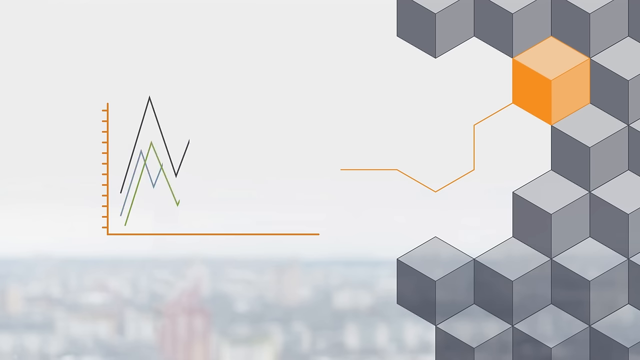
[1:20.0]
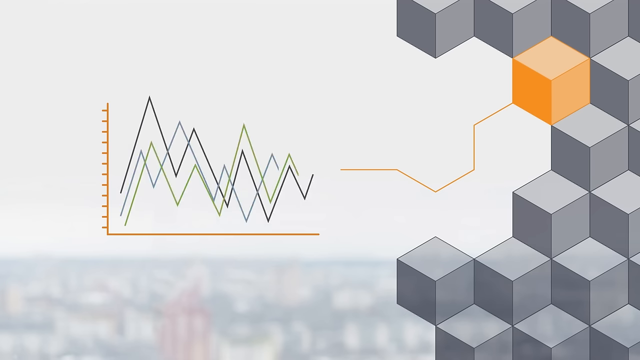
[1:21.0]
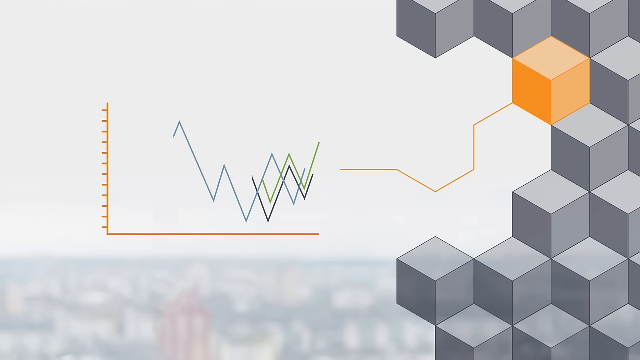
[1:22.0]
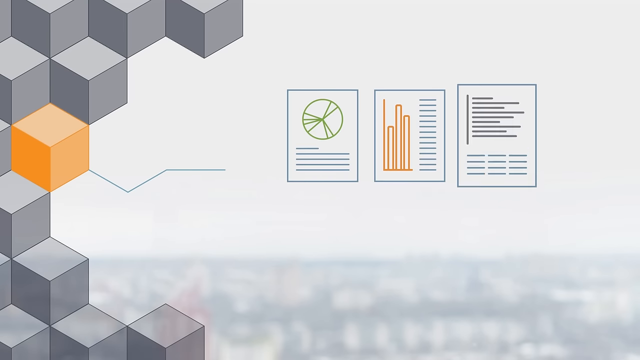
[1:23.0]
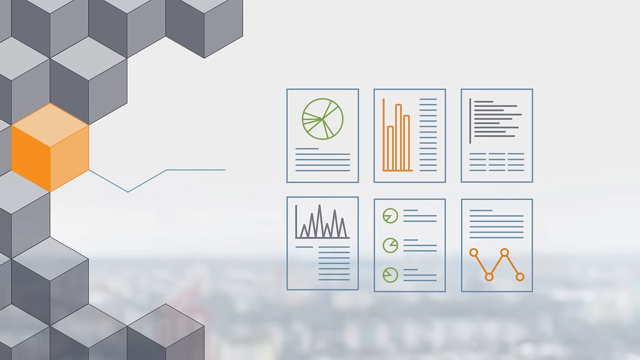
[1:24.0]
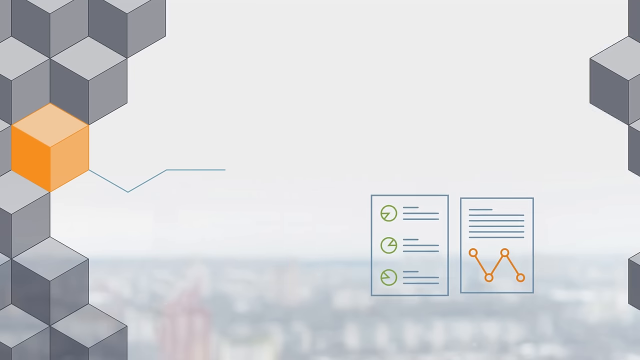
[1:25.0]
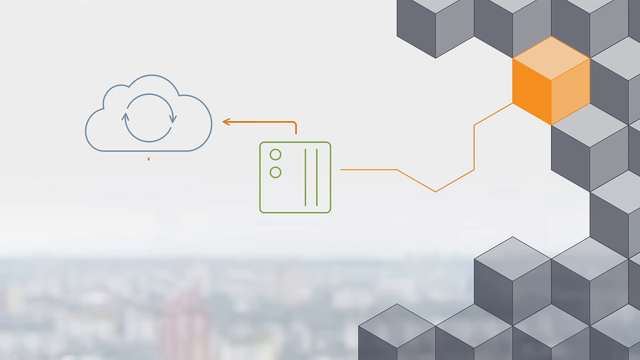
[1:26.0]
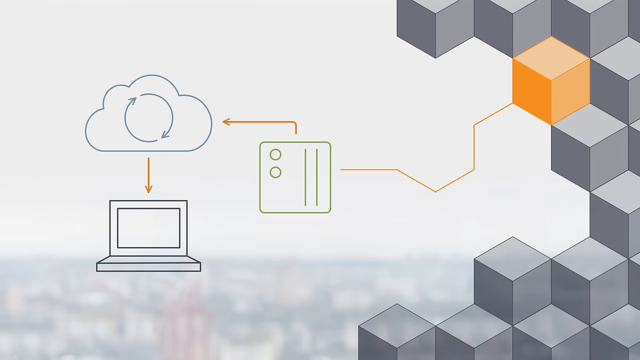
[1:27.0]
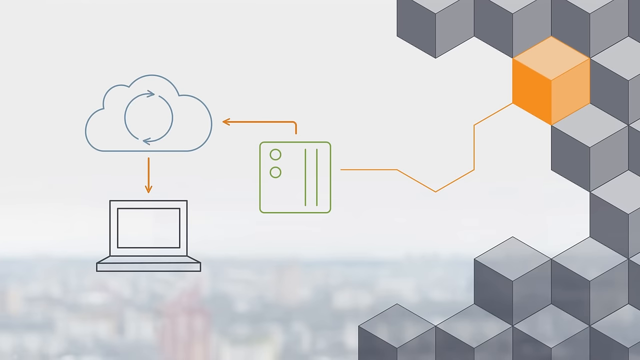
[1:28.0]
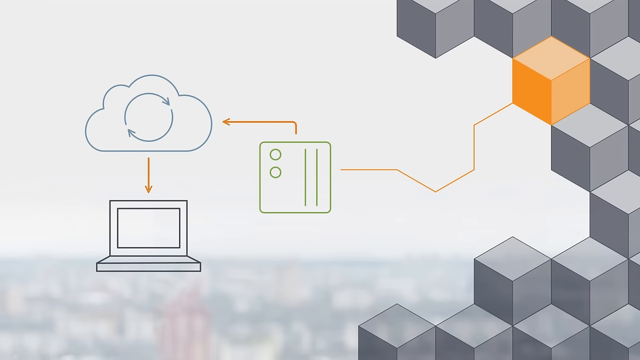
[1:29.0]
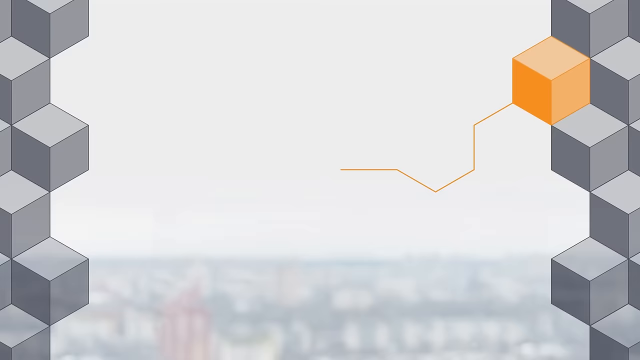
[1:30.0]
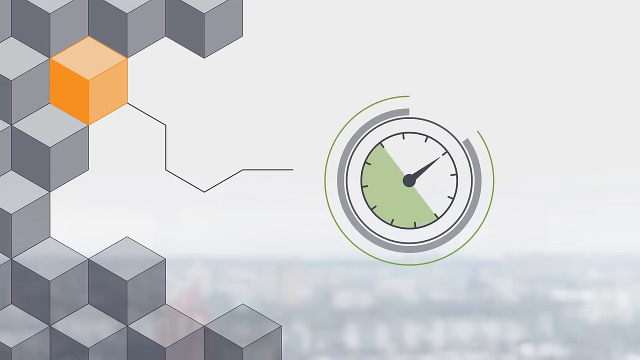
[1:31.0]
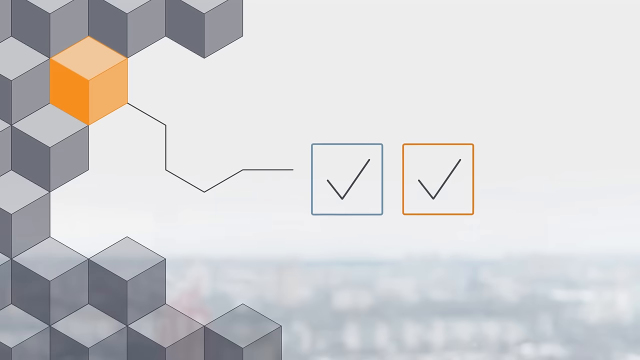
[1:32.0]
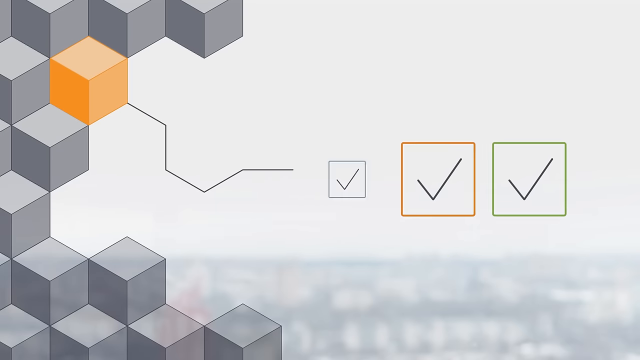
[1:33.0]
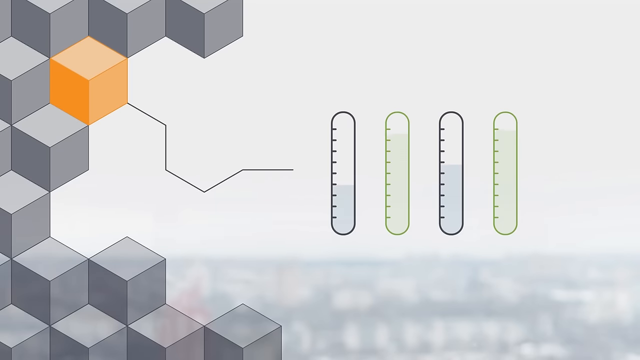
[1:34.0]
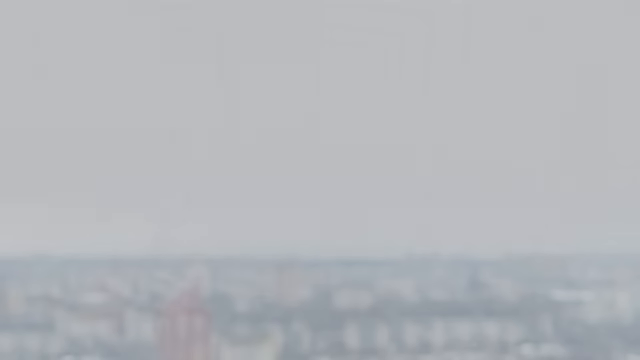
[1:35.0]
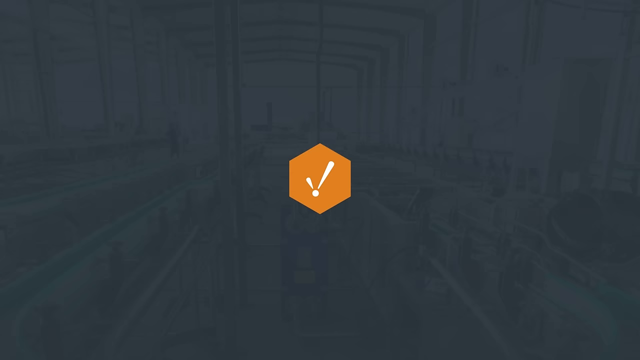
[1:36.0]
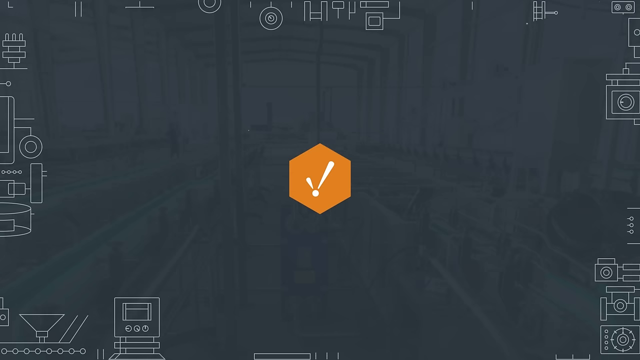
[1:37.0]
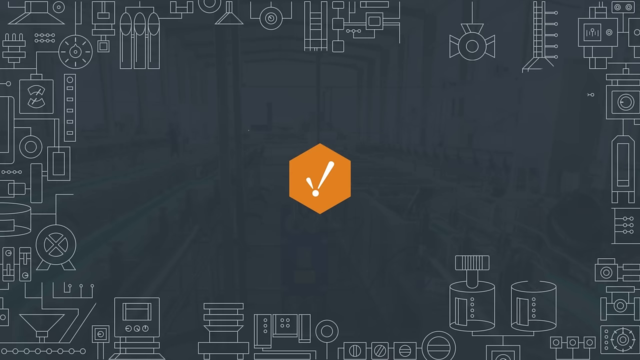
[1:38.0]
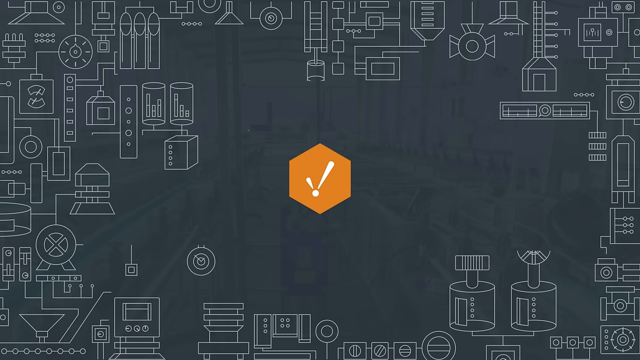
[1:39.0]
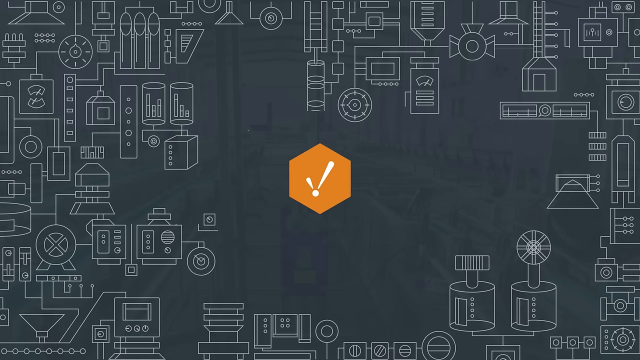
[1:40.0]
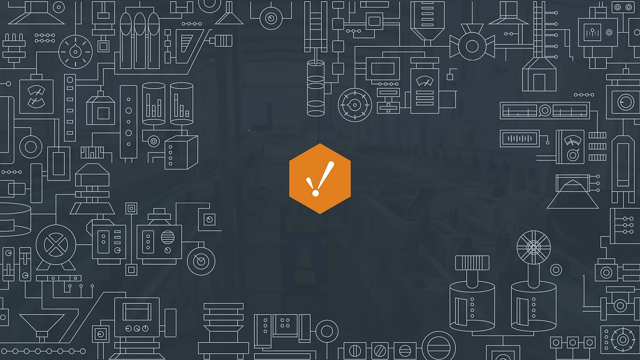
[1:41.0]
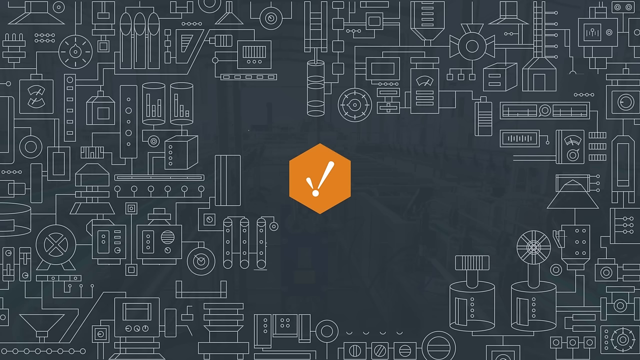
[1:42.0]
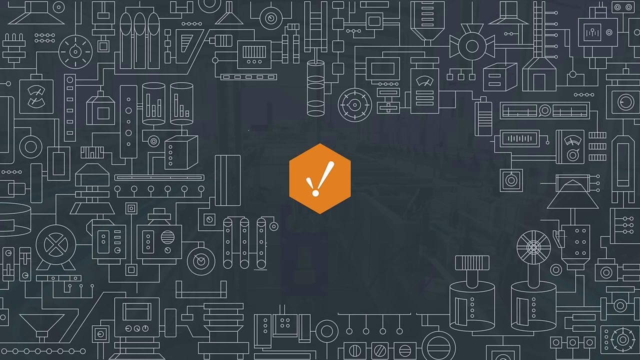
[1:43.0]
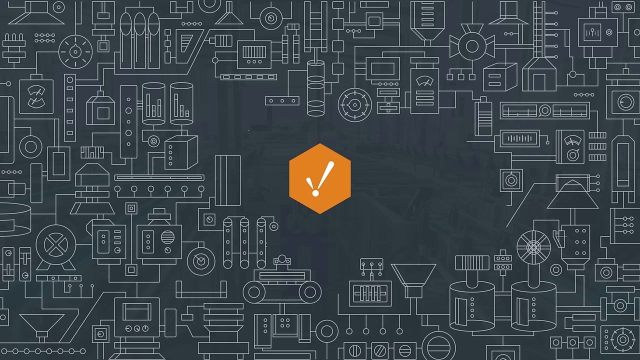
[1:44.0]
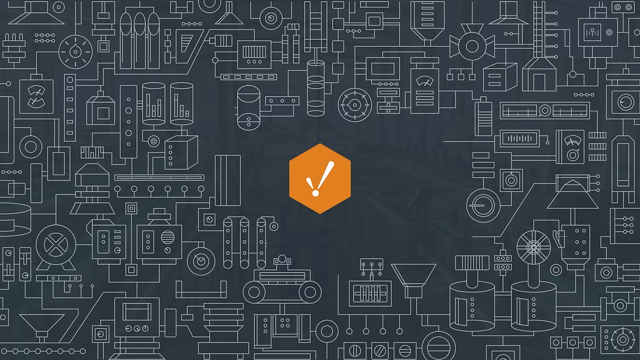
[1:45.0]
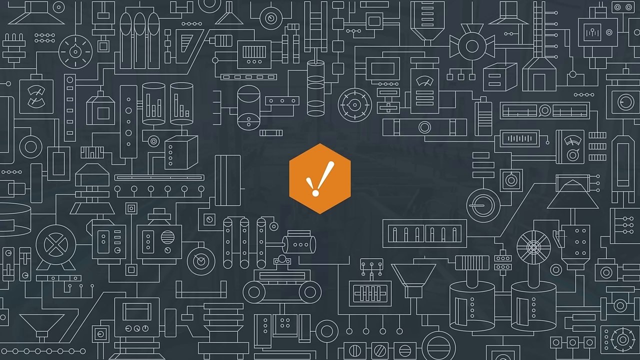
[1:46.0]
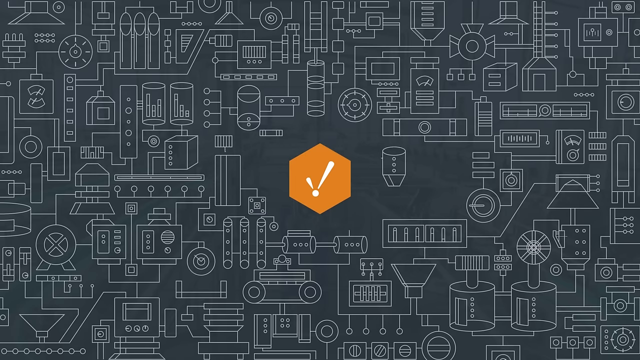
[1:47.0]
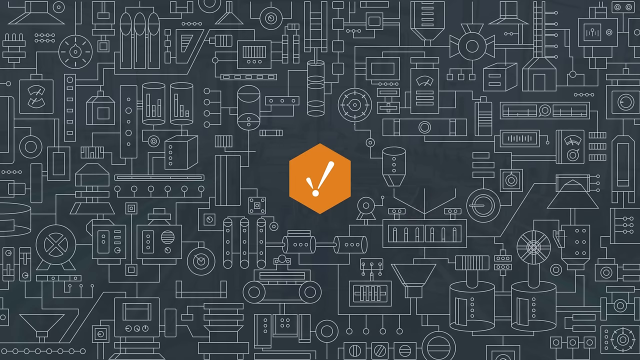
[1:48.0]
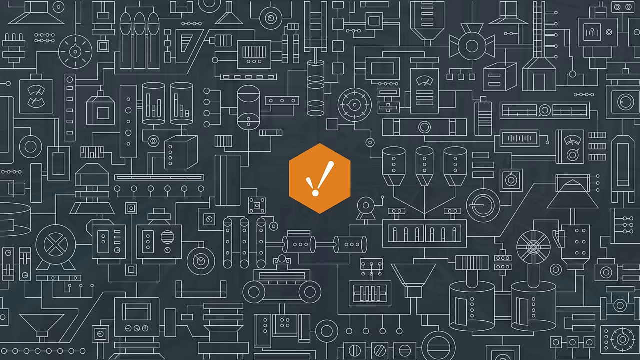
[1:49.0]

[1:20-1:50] Gray check marks are on the right-hand side of the screen. One orange box is highlighted and points to the left side of the screen, which is empty and has a bar chart. Gray boxes then fill up the left side, and the single orange box leads out to a chart and graphs on the right side. All of that goes away. Gray boxes show up on the right side, and the orange box points to a modem, which has an arrow pointing to a cloud, which has an arrow pointing to a laptop. That disappears, and the left side fills with the same gray boxes while the orange box points to what looks to be some type of clock or dial. That instrument disappears, three check boxes appear on the right-hand side, and then they disappear as four scale markings come up. The entire screen turns gray, and an orange hexagonal shape appears with a check mark in the middle. Drawings of all types of shapes take form around the hexagon until they fill the entire screen.